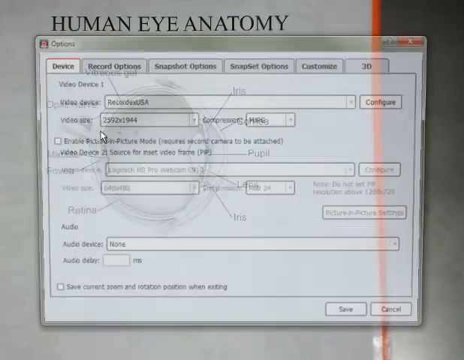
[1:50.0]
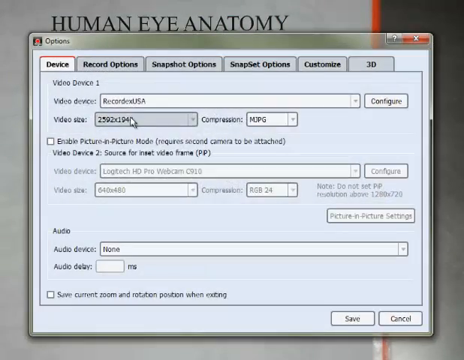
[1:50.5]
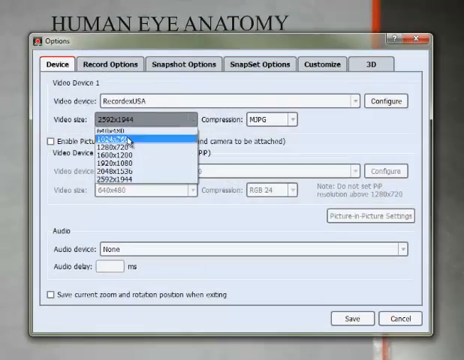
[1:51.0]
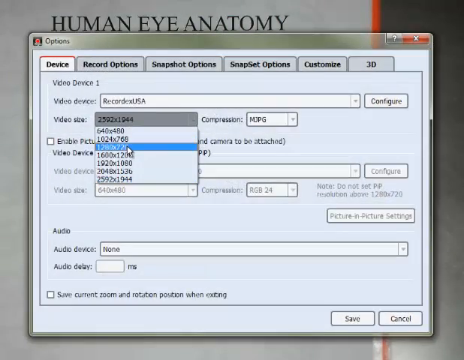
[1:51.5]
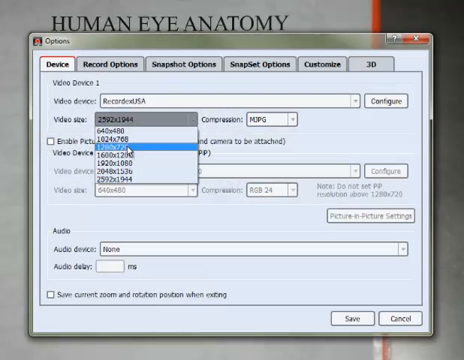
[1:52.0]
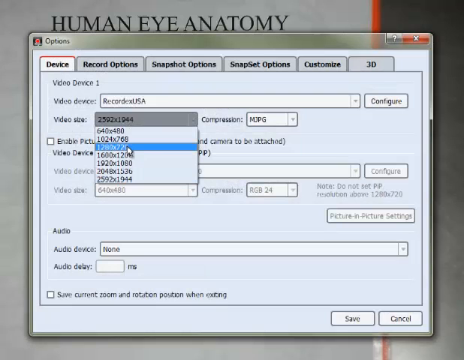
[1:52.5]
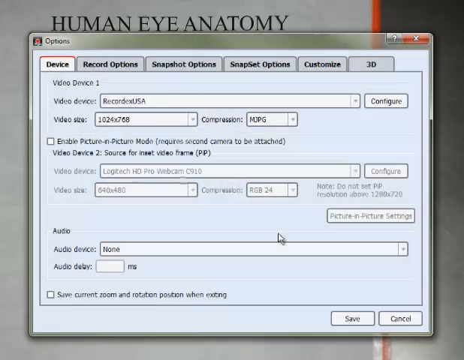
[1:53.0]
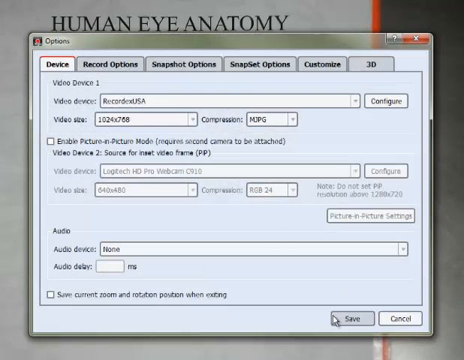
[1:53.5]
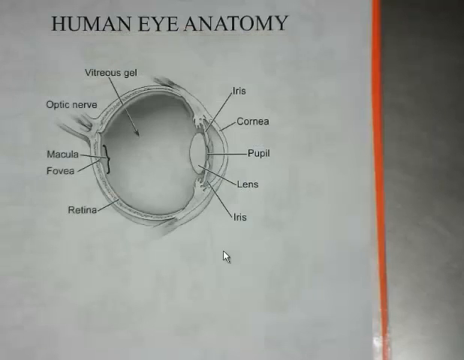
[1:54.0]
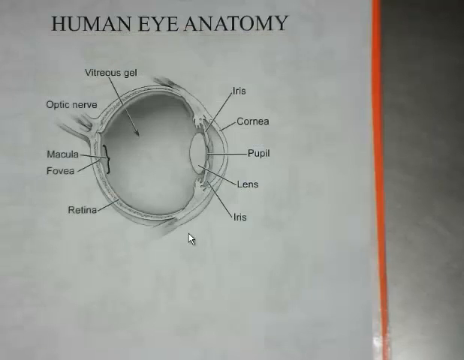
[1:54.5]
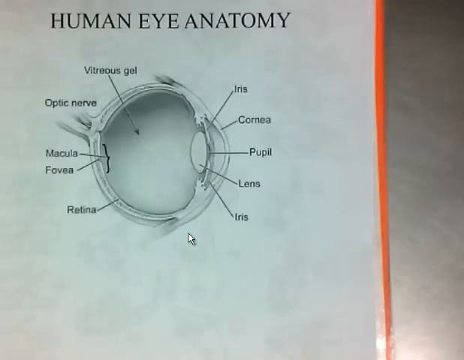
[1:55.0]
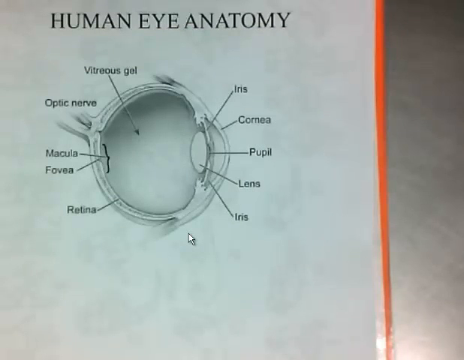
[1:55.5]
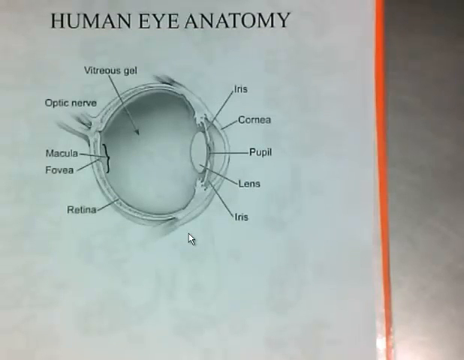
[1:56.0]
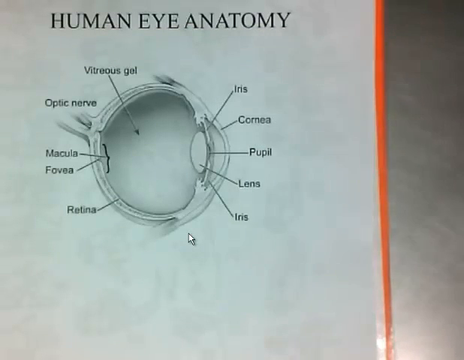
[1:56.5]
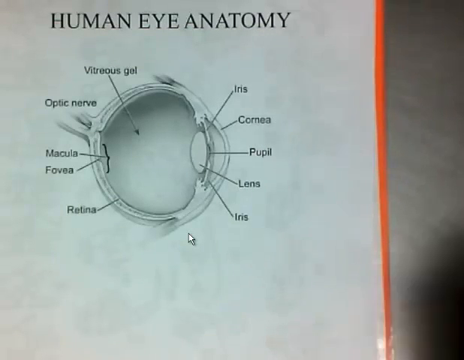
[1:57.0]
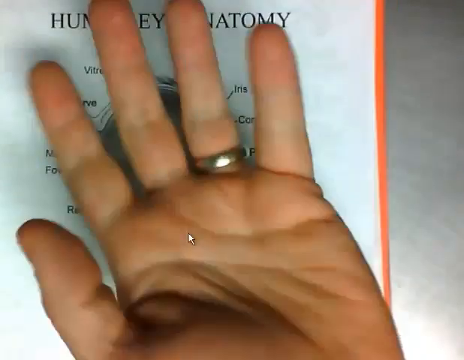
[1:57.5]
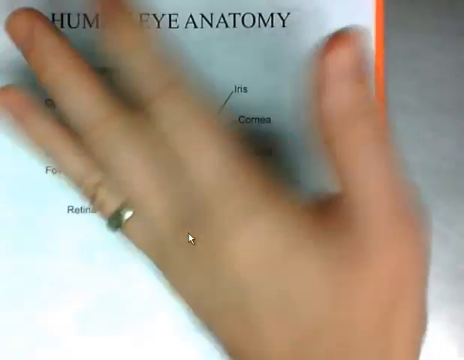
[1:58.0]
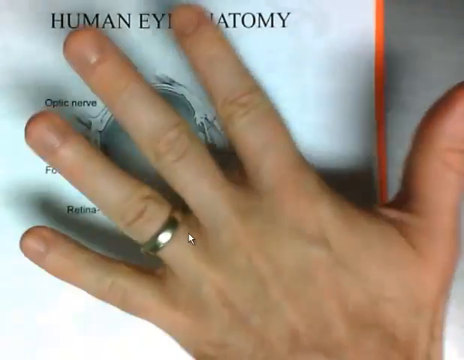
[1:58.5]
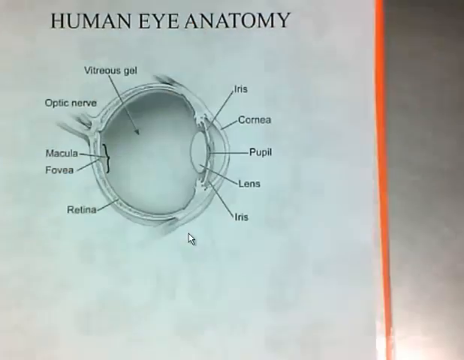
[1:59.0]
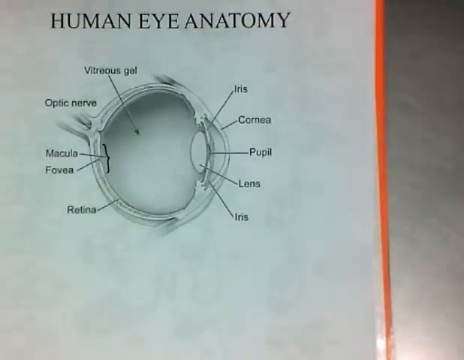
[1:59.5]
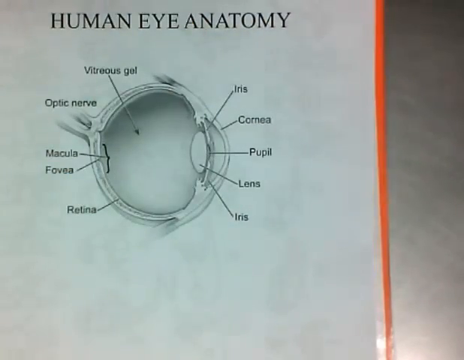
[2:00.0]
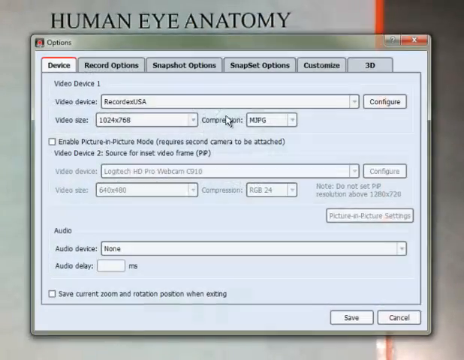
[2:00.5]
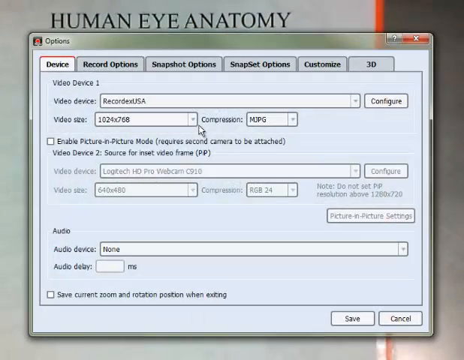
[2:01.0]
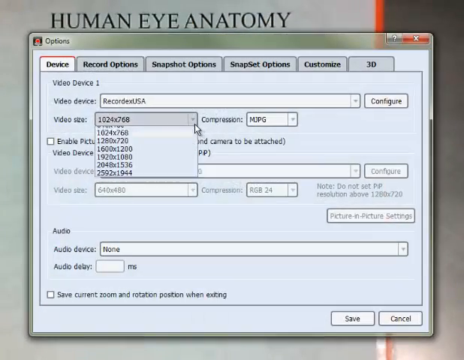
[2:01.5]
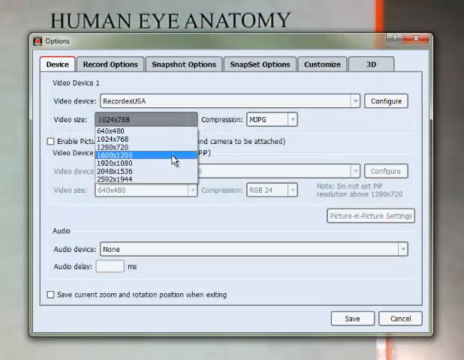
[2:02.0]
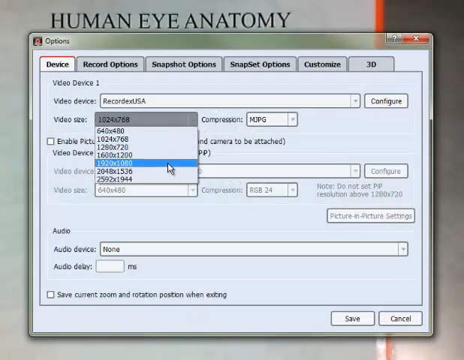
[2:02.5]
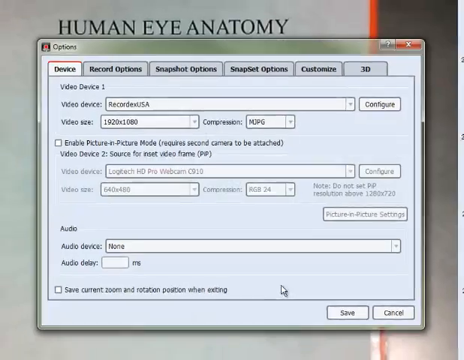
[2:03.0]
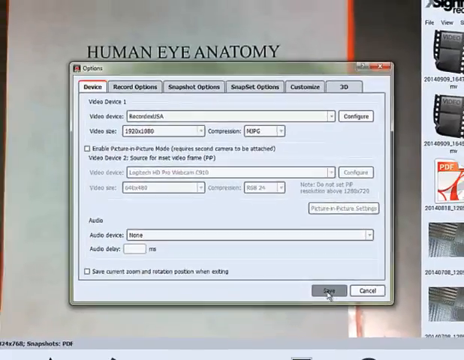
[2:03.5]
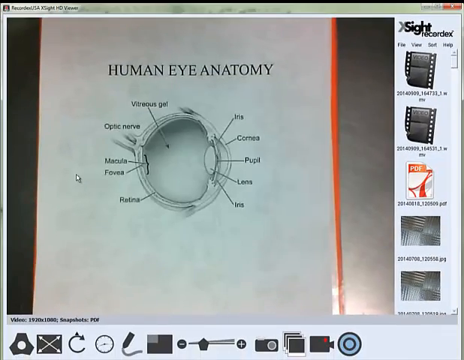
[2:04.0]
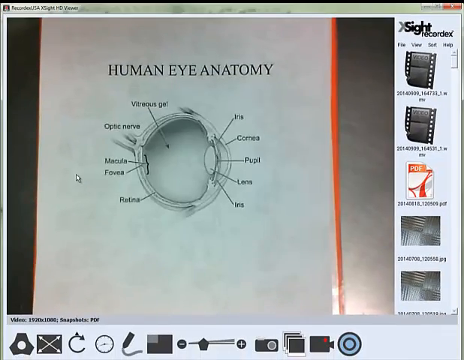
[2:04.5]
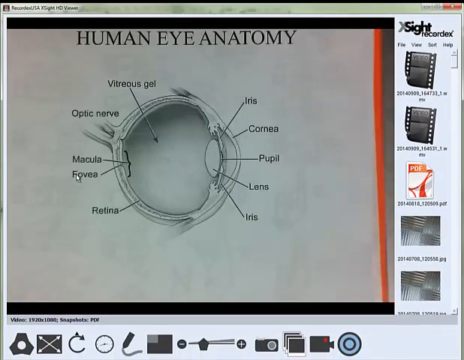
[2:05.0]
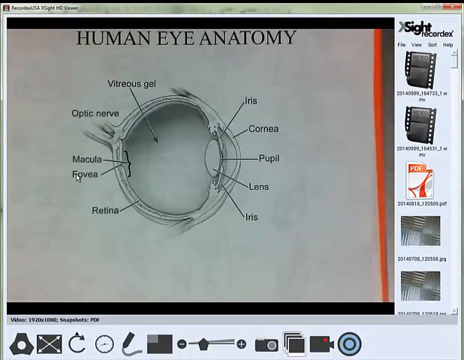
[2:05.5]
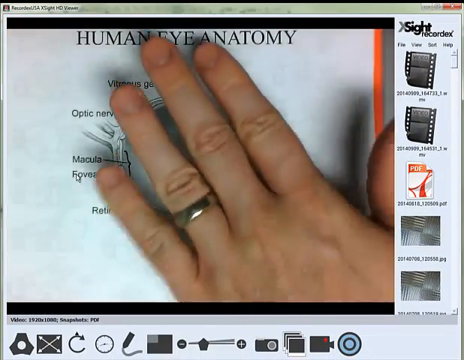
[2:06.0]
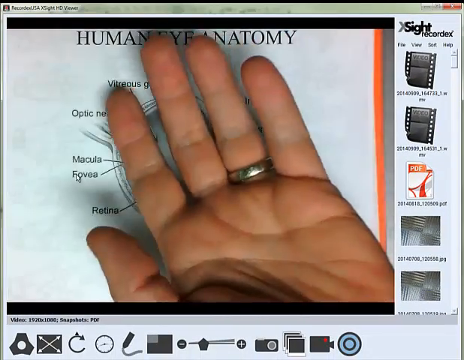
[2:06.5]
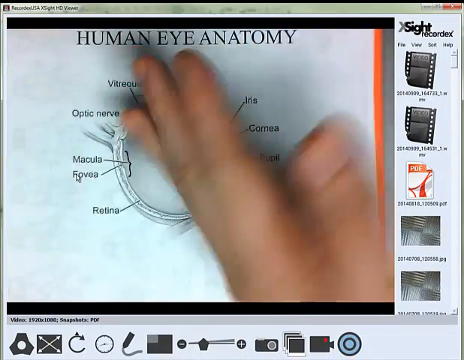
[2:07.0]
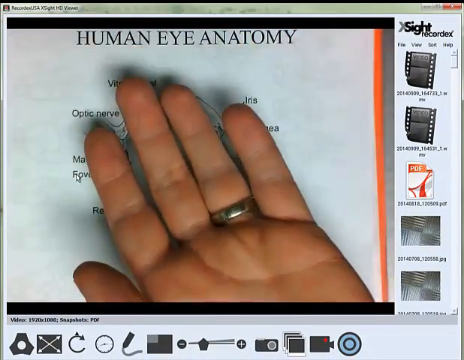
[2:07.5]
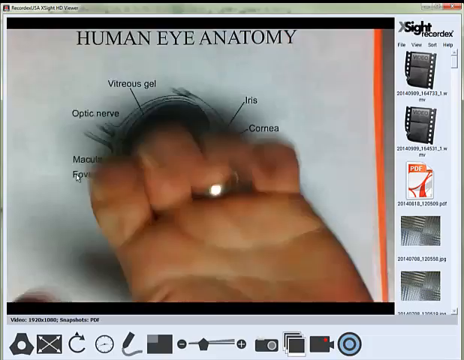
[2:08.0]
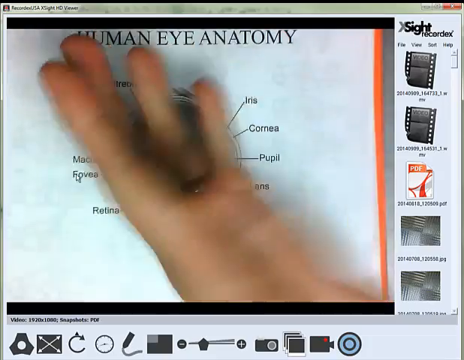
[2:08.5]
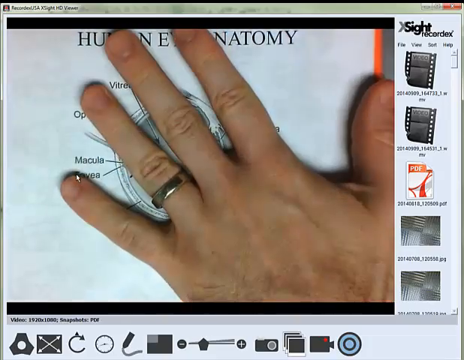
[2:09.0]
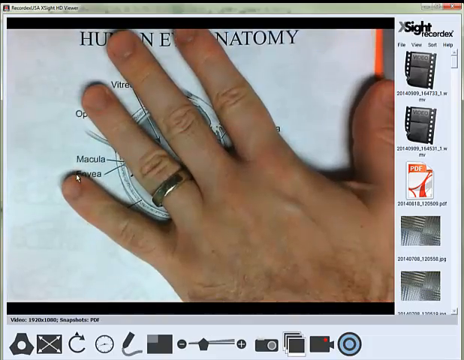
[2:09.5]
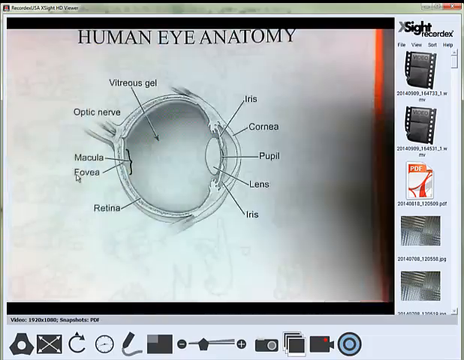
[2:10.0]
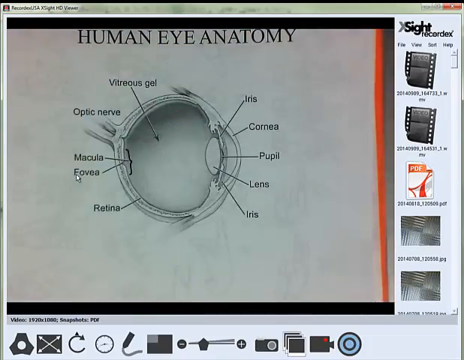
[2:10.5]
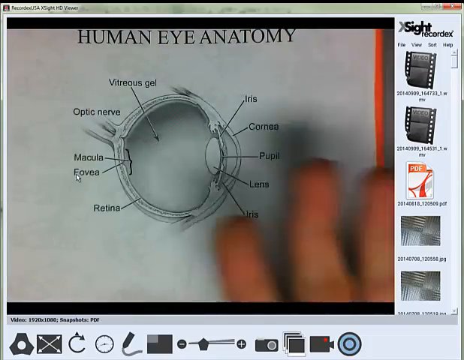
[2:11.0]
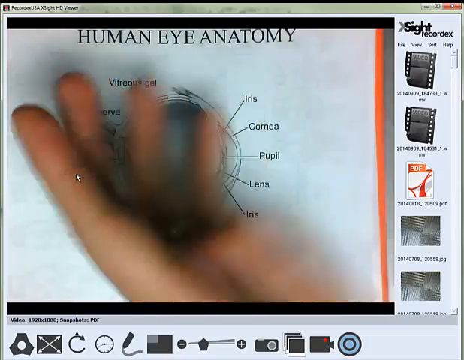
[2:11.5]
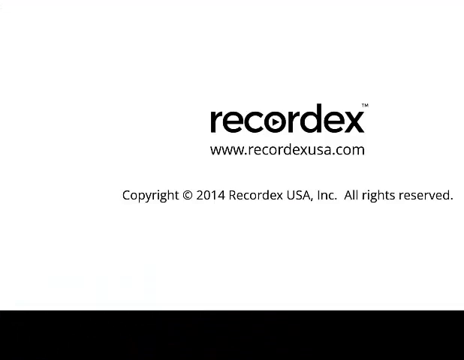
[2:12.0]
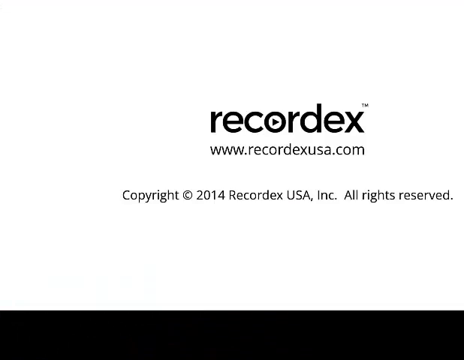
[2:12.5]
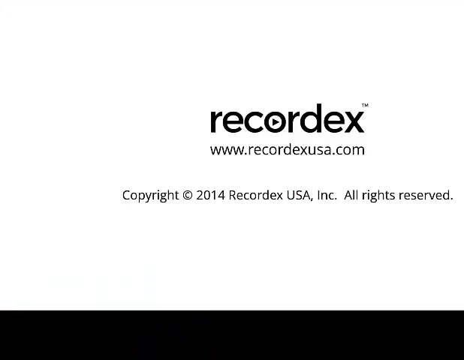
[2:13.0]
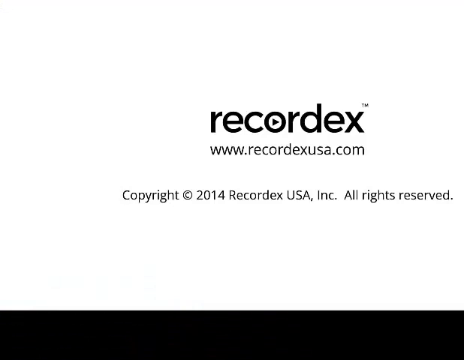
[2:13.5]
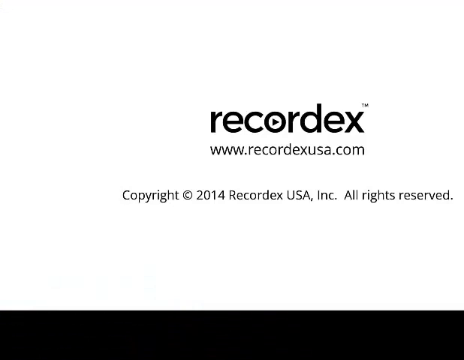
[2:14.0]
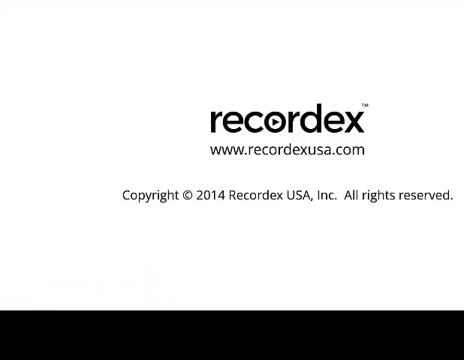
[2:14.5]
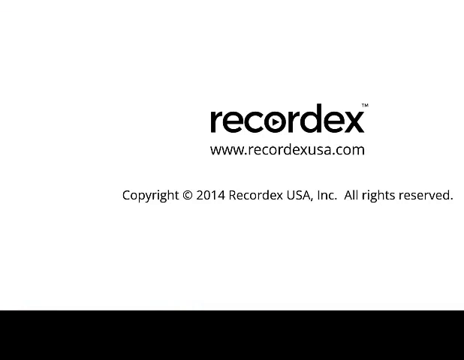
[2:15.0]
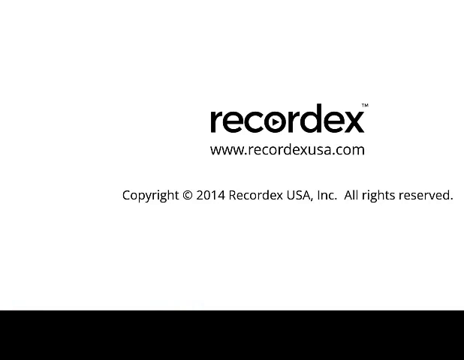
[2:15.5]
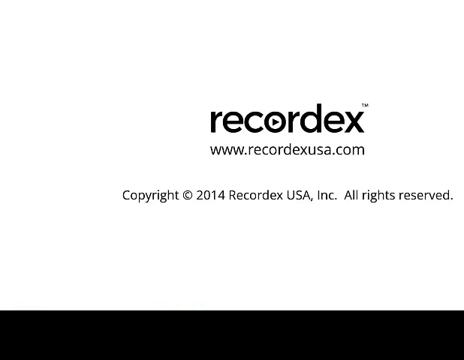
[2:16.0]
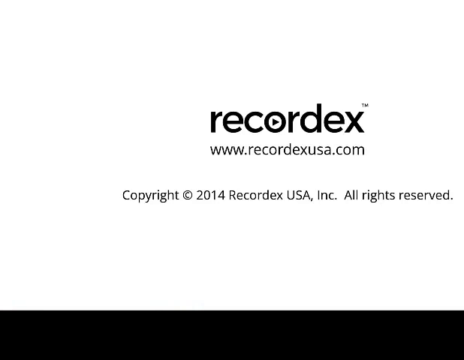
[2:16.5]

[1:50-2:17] A square box is open on the screen that says "Options," and below it are tabs: "Device," "record options," "snapshot options," "customize" and "3D." The device tab looks like it is open, with multiple boxes that can be filled out and different information to choose from. A white arrow pointer goes through the different options, and save is clicked. What looks to be a book that says "Human Eye Anatomy" is in the background, and a hand pops up on the screen, appearing to be over top of the book, and moves back and forth. The box comes up once again and someone picks some of the options. Then a white screen appears that says "recordex," and below that "www.recordexusa.com."